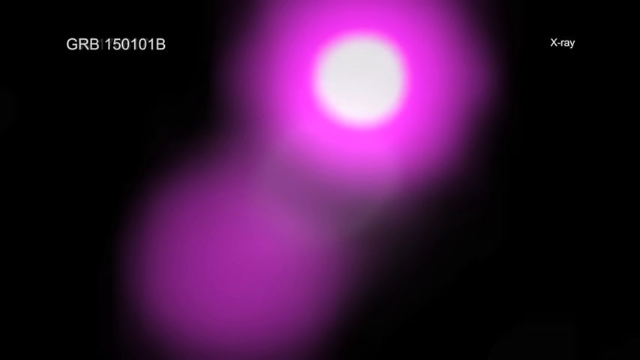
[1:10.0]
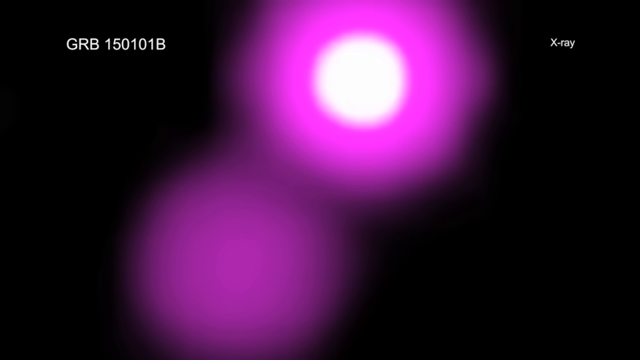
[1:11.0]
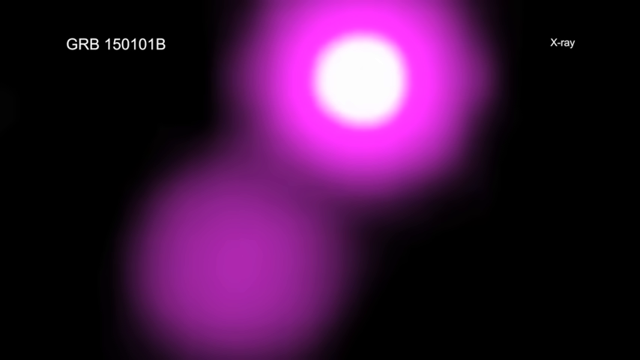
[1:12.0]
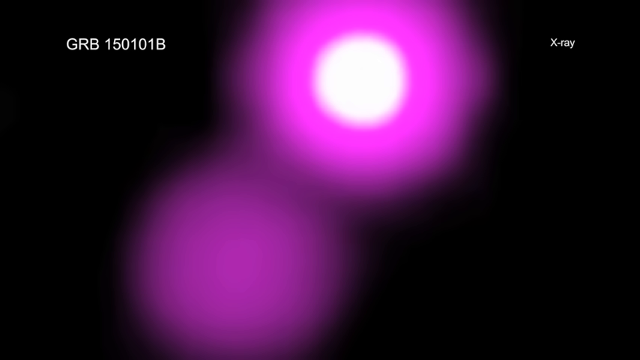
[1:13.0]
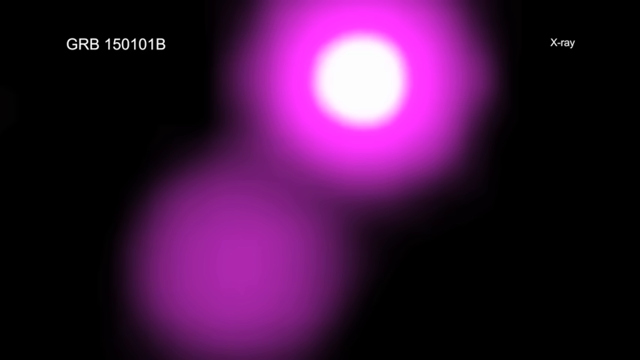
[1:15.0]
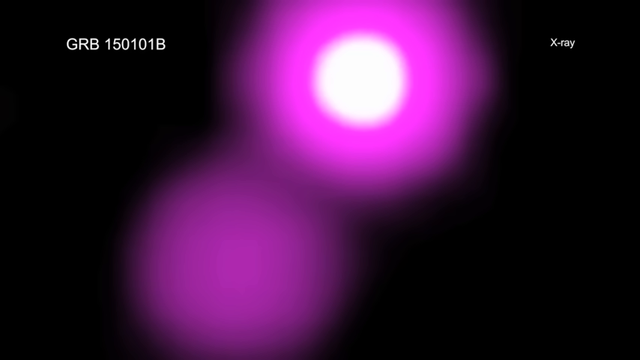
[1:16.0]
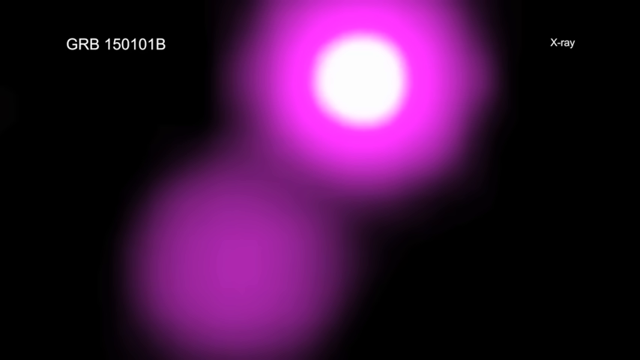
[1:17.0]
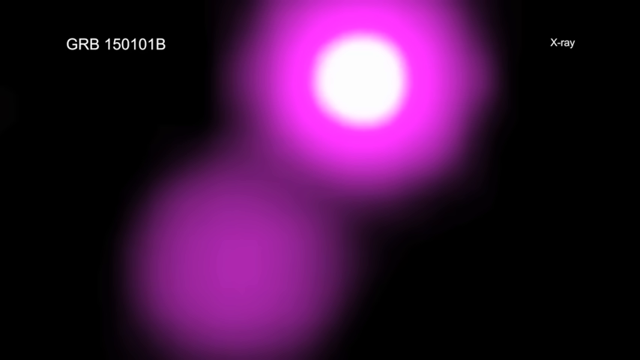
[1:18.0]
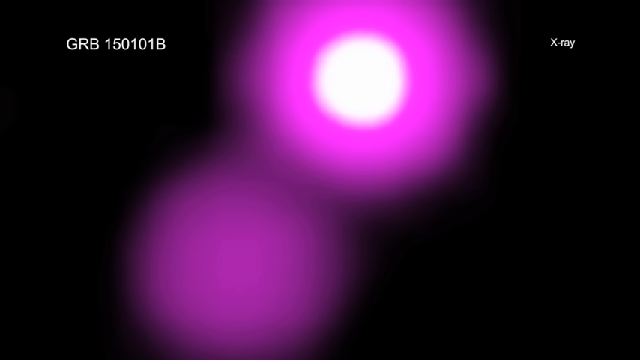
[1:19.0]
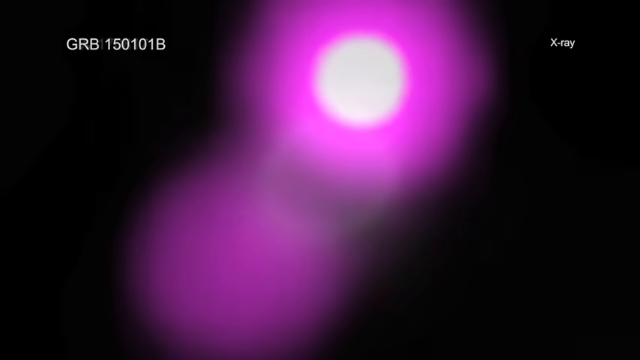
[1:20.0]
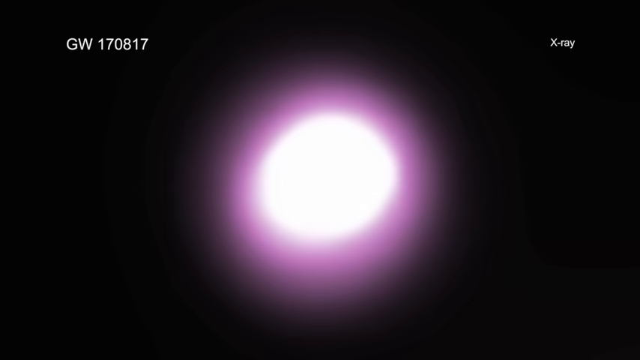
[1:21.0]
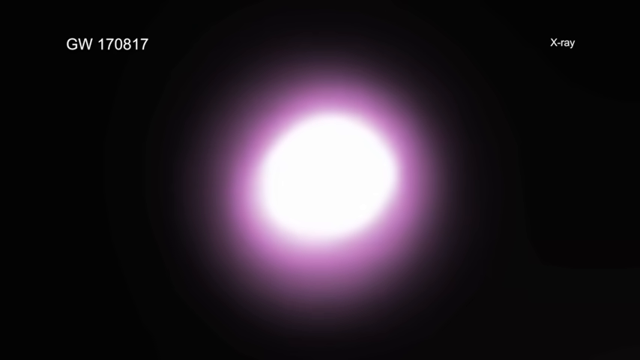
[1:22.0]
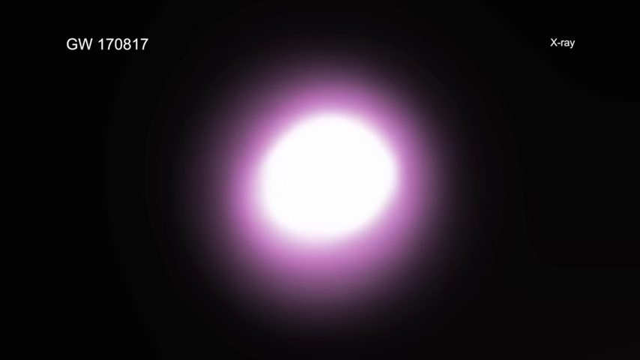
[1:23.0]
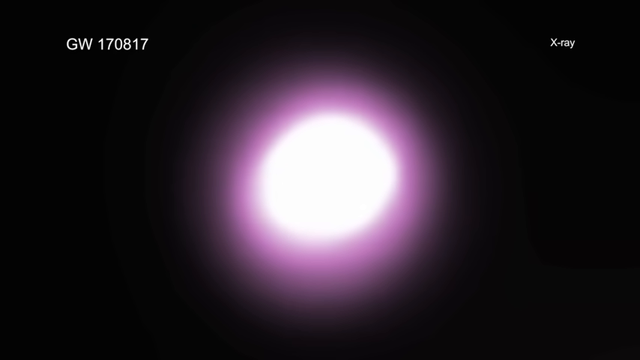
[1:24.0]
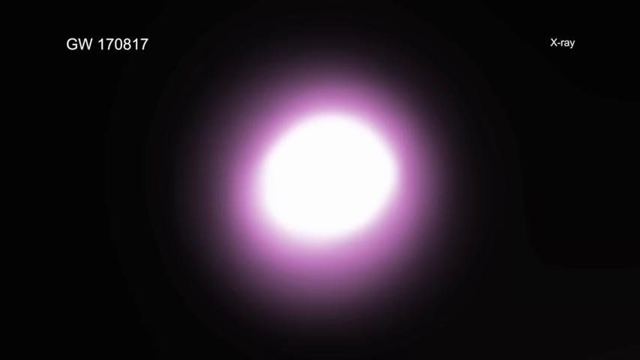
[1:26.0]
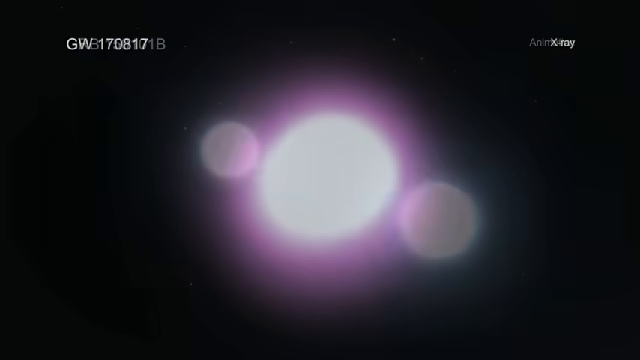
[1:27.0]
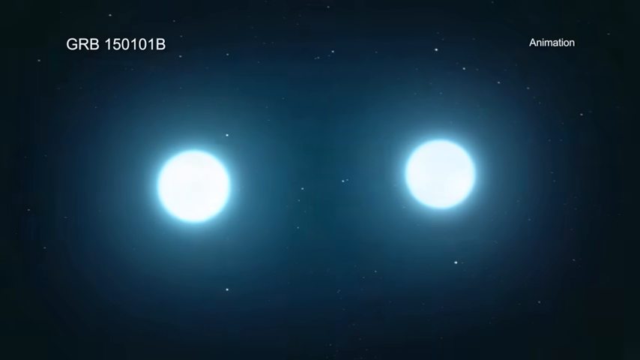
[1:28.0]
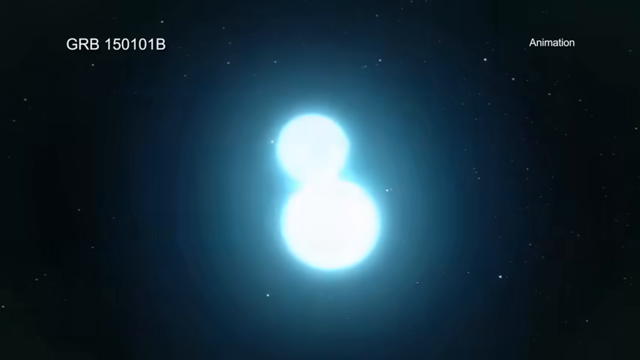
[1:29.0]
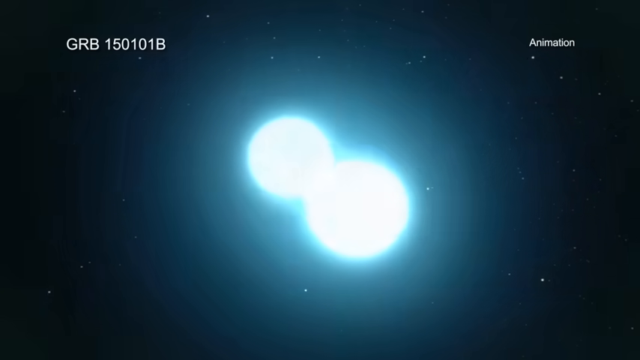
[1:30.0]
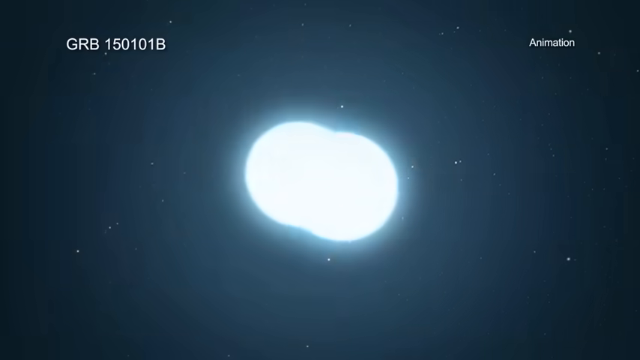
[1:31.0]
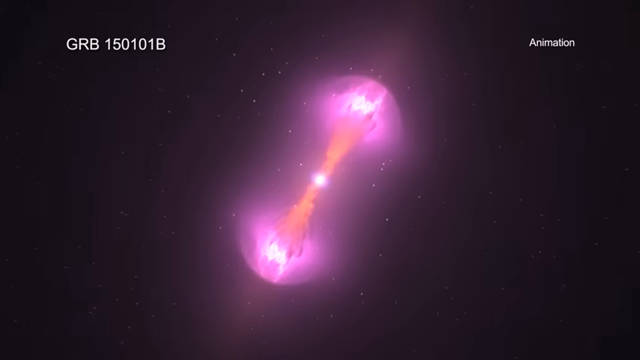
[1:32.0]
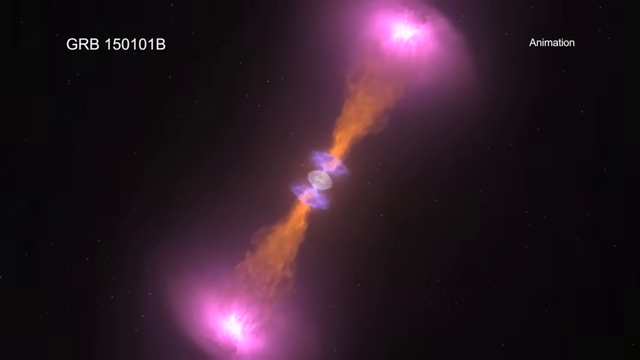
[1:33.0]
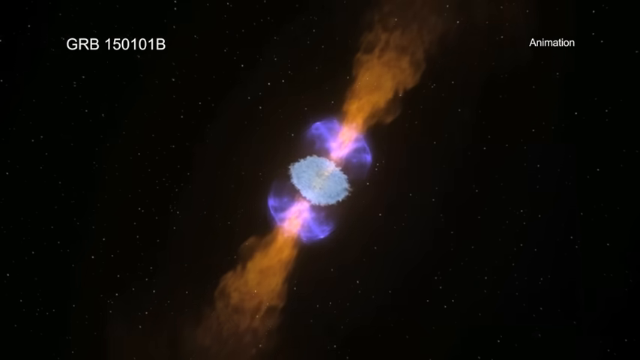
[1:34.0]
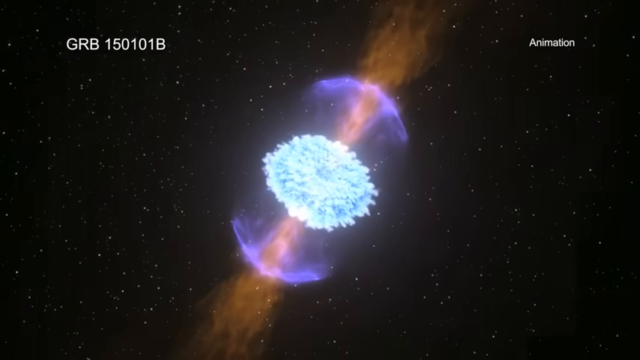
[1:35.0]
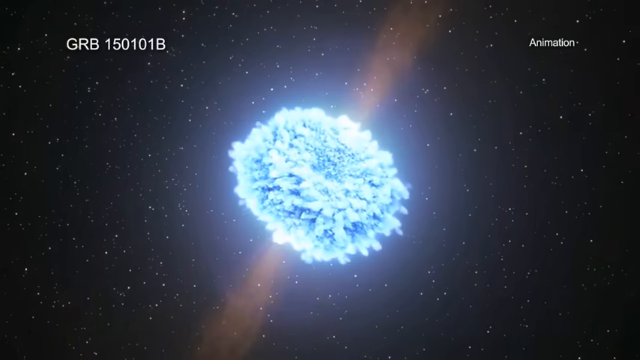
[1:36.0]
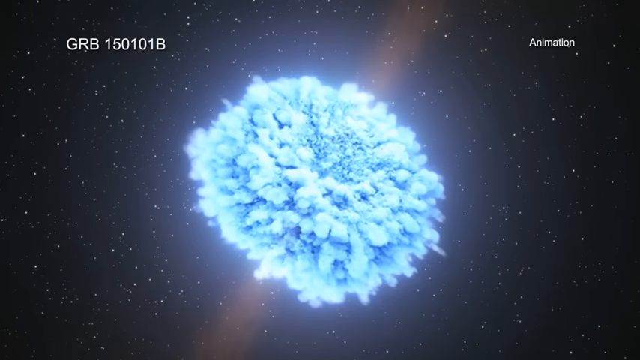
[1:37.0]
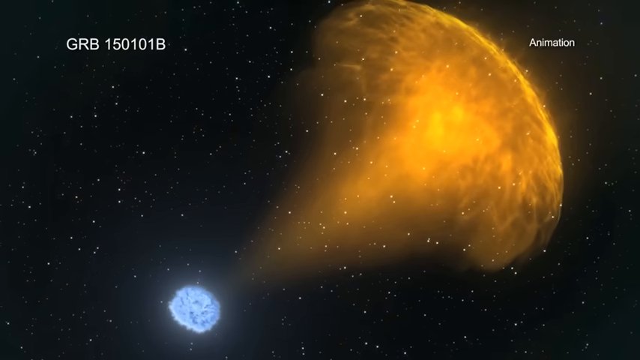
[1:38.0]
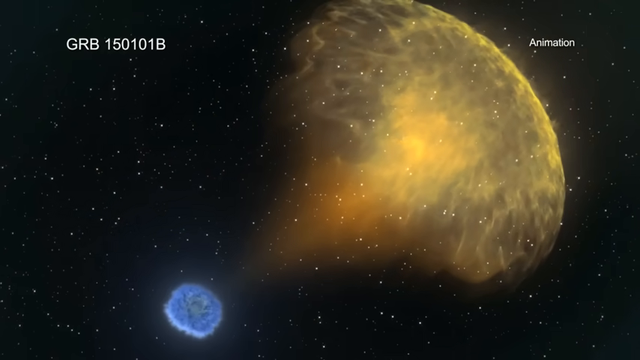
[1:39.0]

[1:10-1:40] A pink and white sphere of energy appears on an all-black background with no other objects. Its inner portion is bright white and its outer part is a pink miasma. Below the sphere is a separate fluorescent pink miasma without a bright white center. A label at the top left reads "GRB 150101B" and the top right reads "X-Ray". The pink sphere then changes shape and two balls start to rotate around each other, spinning faster and faster and getting closer until they merge. Once they merge, a large torus-like energy explosion takes place; the pink sphere changes into an orange pattern shooting out, then into a larger blue object that expands on itself. A large energy field is also seen off to the right.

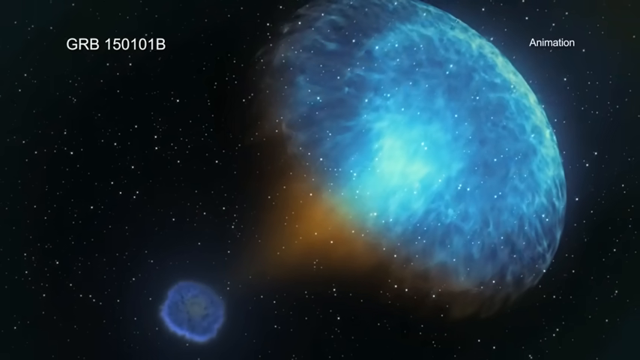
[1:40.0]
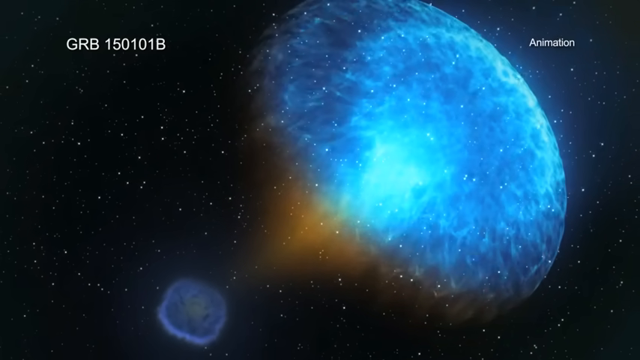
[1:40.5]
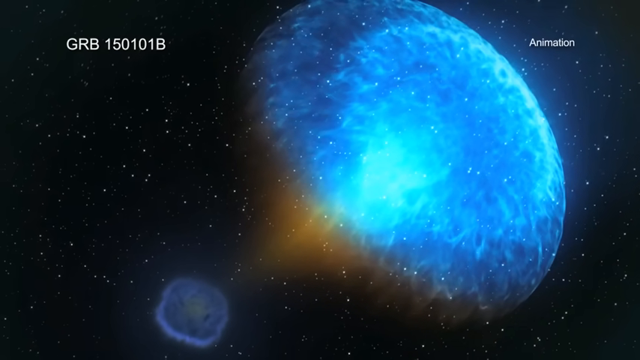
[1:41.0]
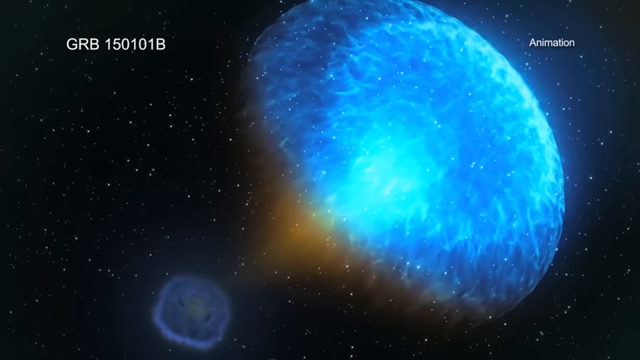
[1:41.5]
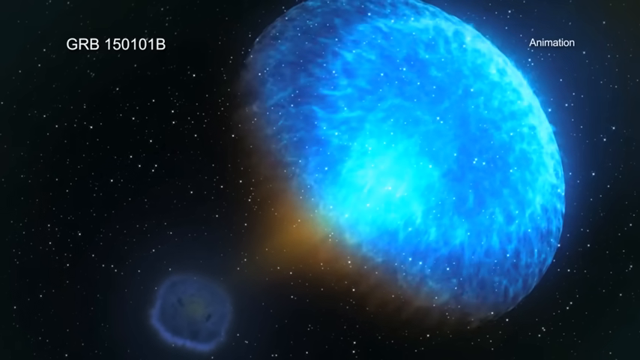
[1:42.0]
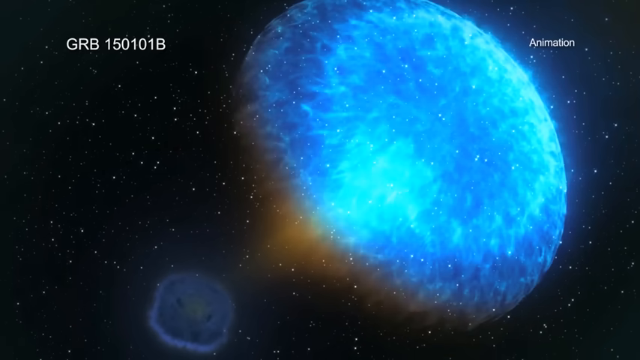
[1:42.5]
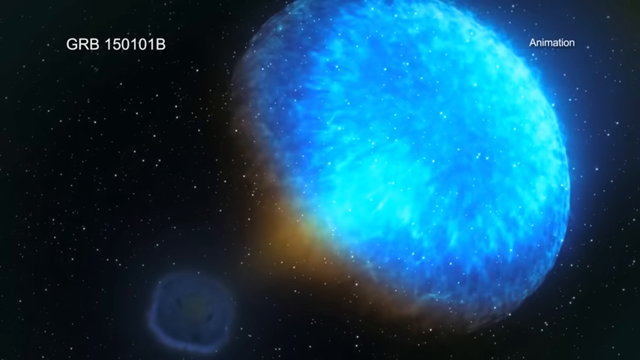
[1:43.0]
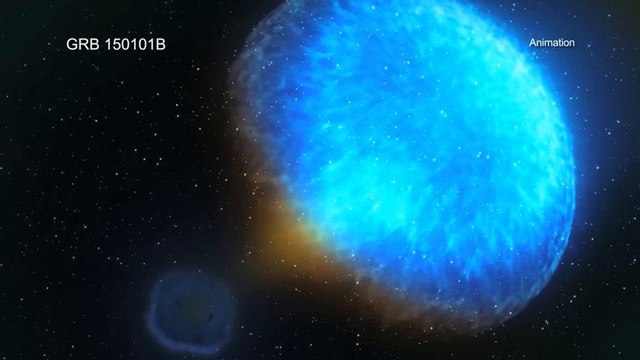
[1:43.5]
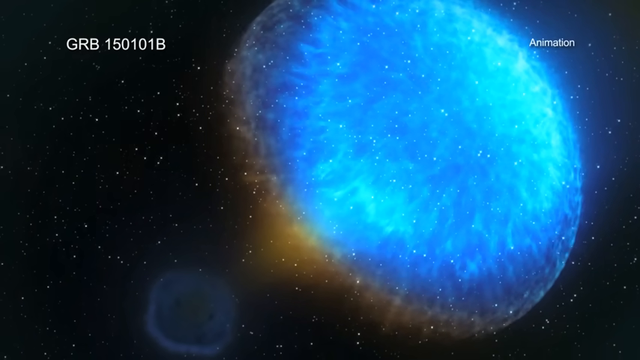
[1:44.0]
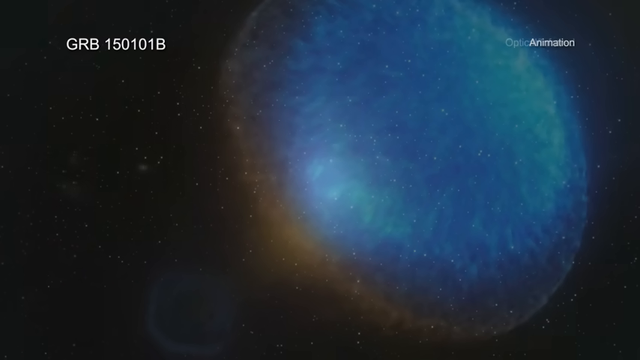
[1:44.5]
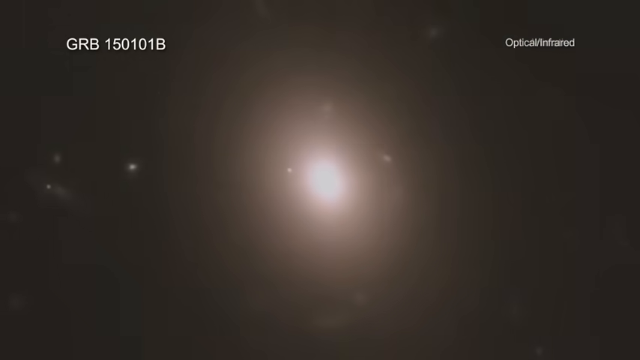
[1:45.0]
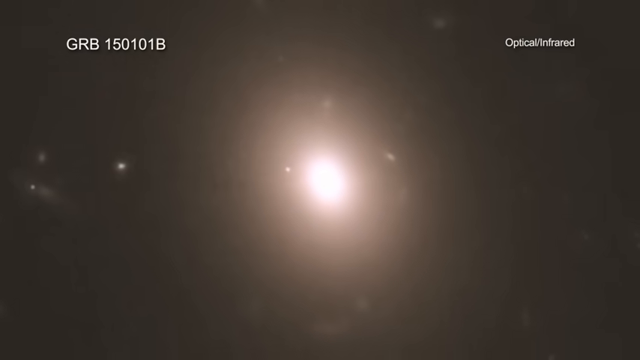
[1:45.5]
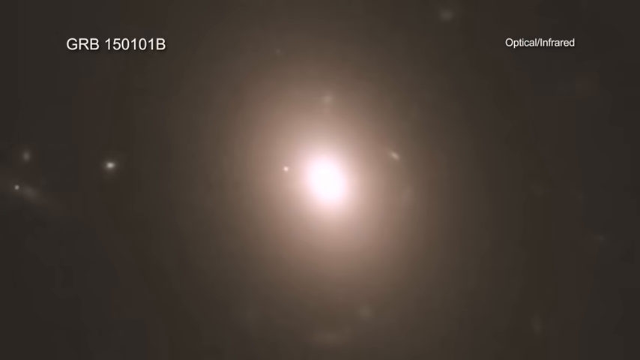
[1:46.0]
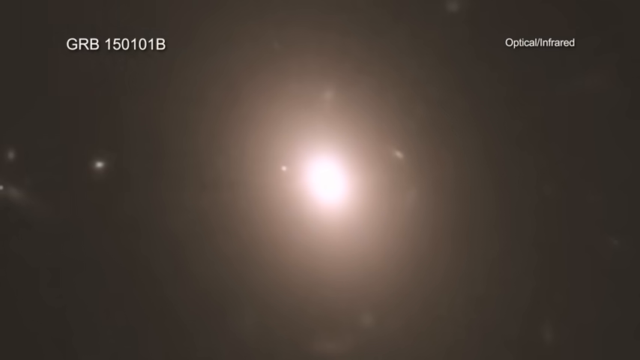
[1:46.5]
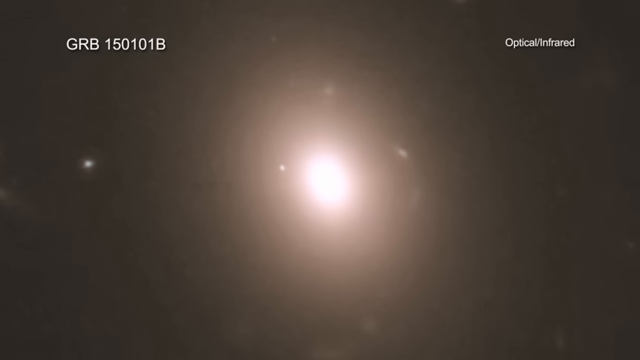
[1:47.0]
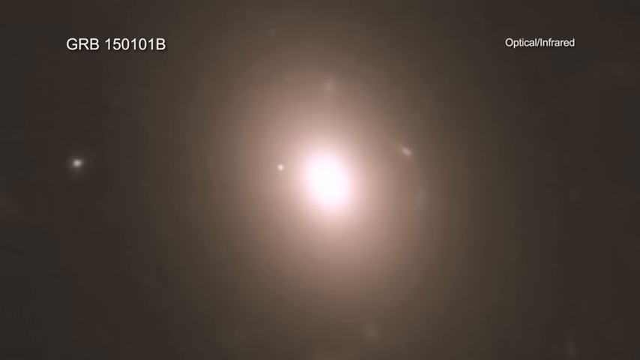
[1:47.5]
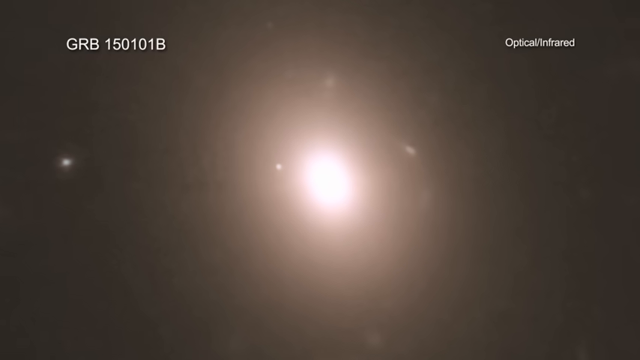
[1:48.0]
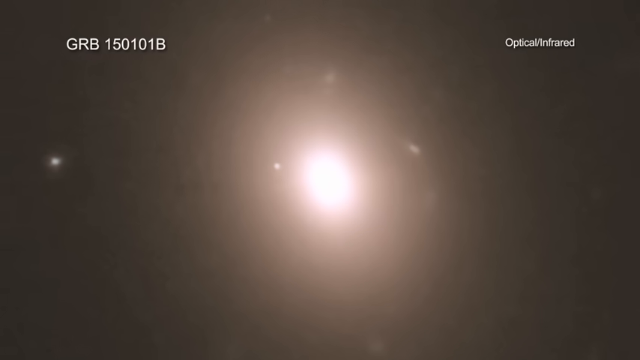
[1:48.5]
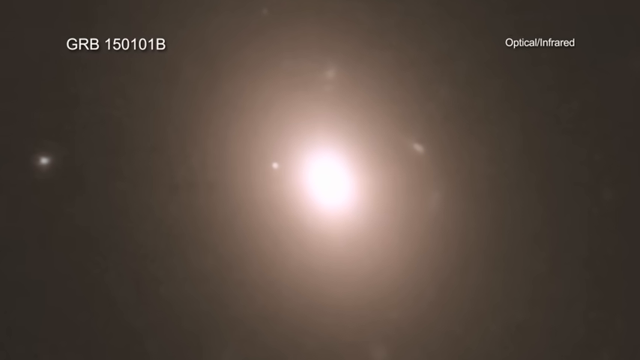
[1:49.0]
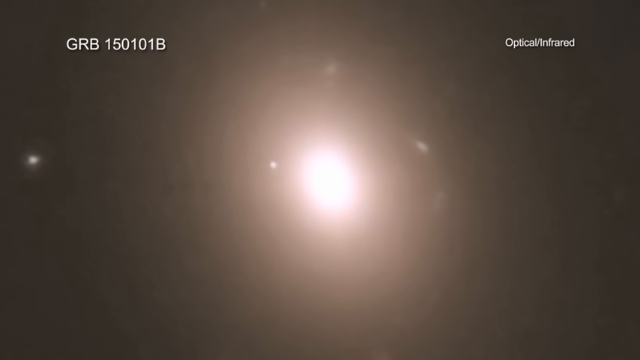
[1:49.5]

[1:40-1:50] An animated solar explosion takes place. A smaller blue sphere is at the bottom left, and a large energetic sphere is to the right, colored deep blue and light blue with an outer border of orange and yellow. The background is deep black space with large groupings of bright white dots representing stars. The scene transitions to a close-up of another star, a yellowish white light, with other stars to its left and right.